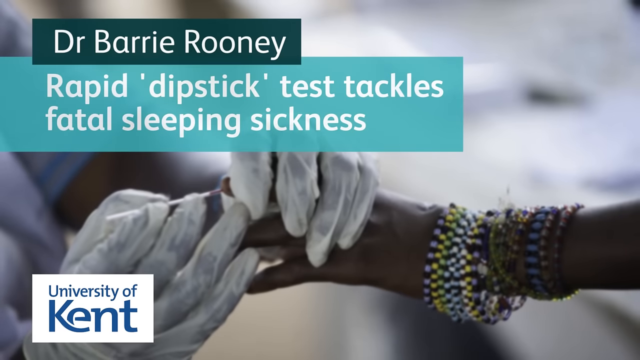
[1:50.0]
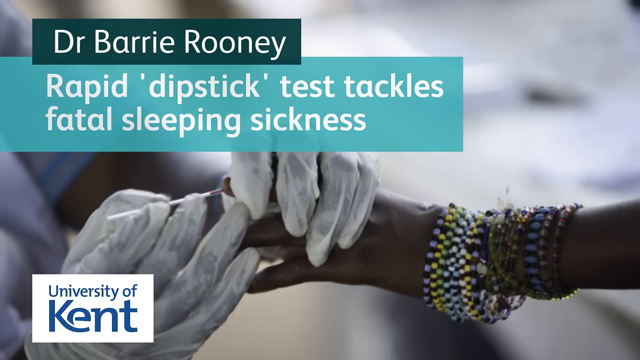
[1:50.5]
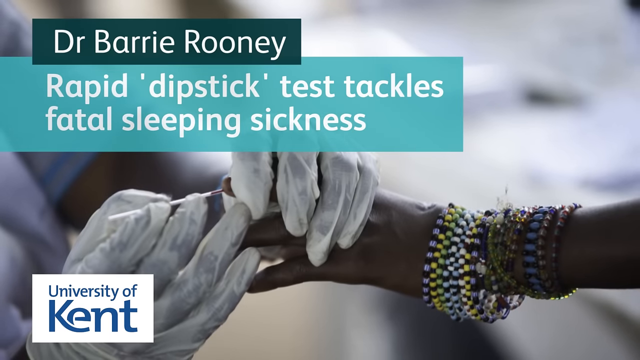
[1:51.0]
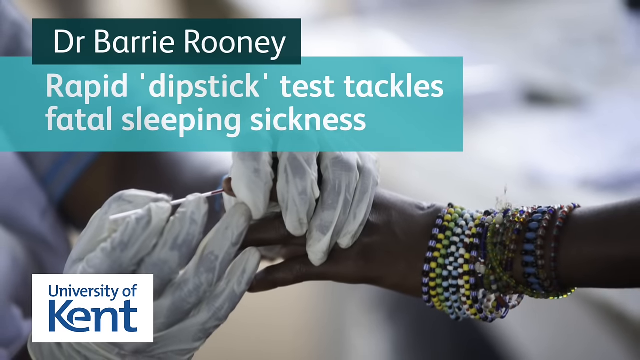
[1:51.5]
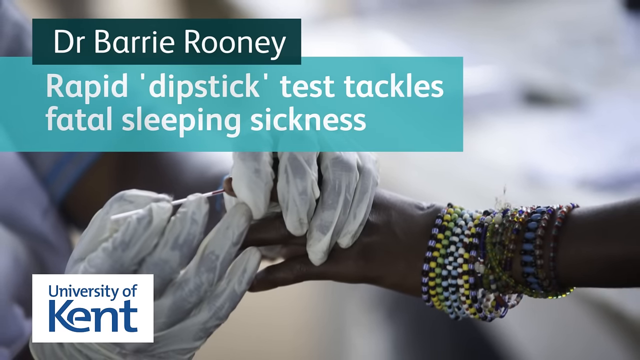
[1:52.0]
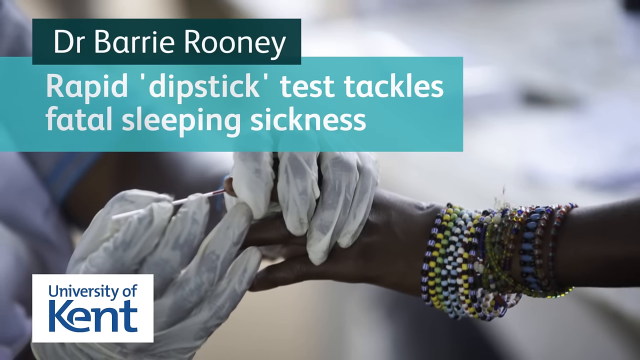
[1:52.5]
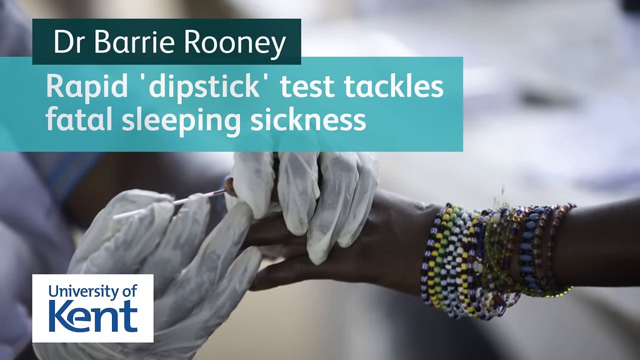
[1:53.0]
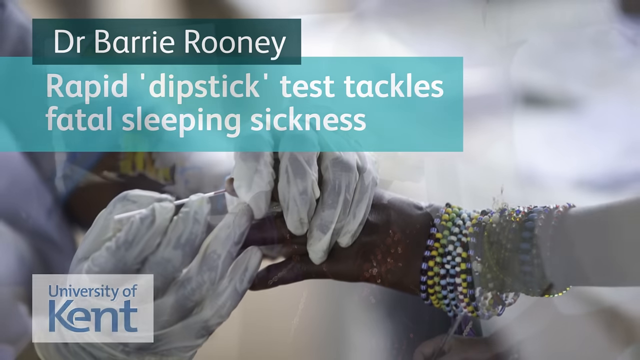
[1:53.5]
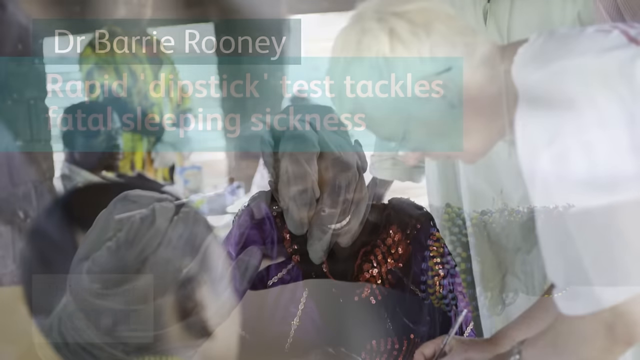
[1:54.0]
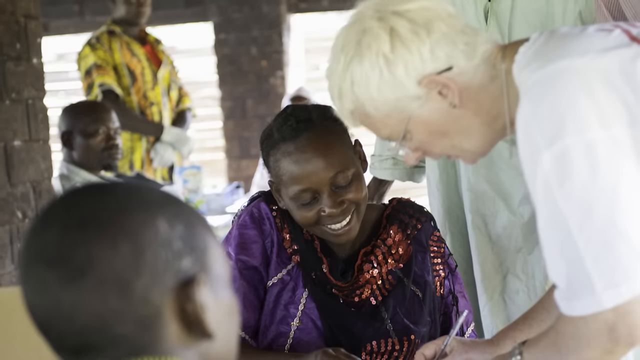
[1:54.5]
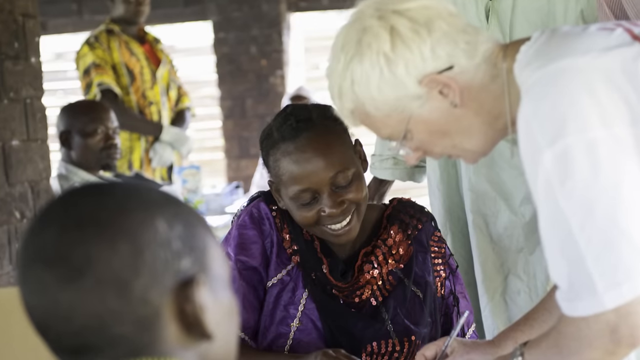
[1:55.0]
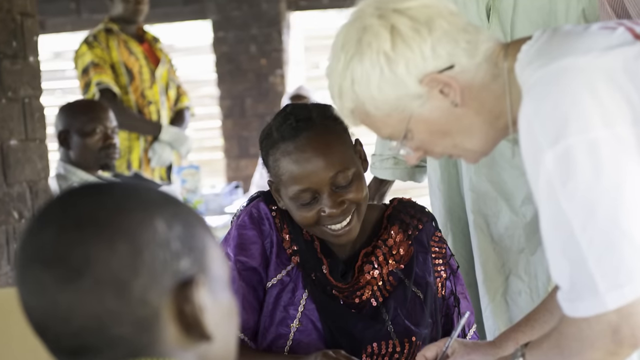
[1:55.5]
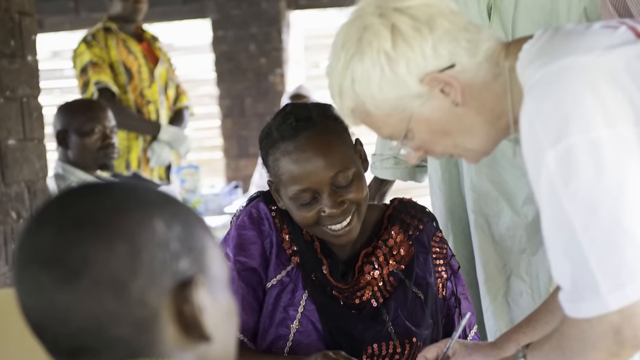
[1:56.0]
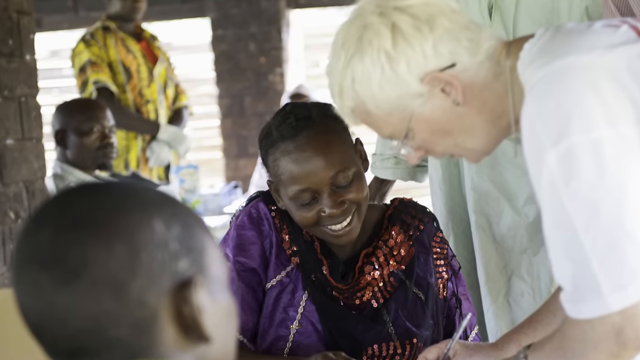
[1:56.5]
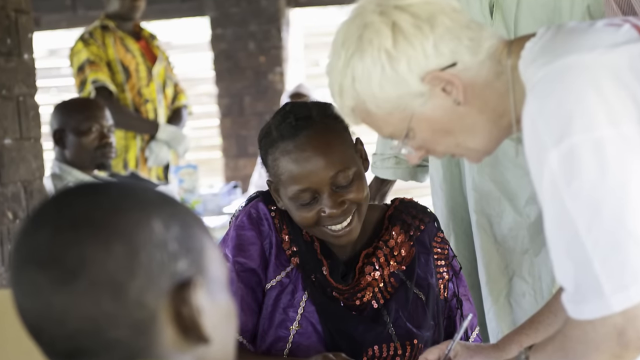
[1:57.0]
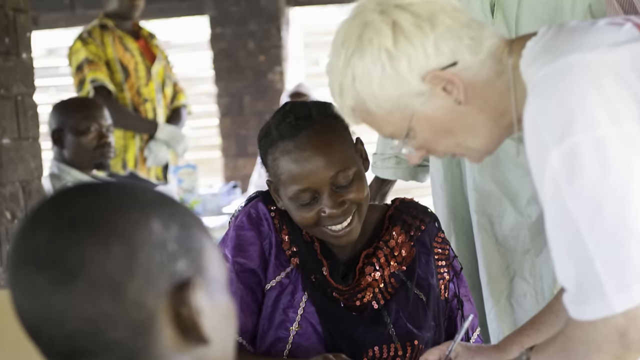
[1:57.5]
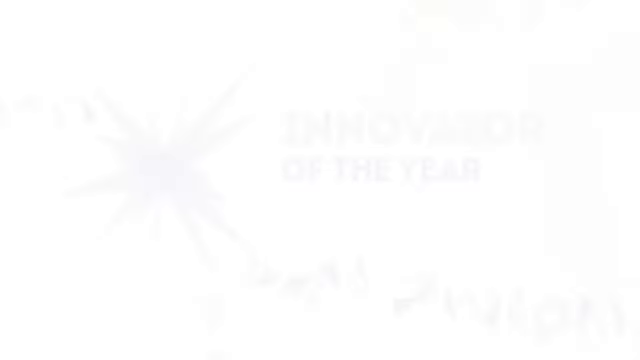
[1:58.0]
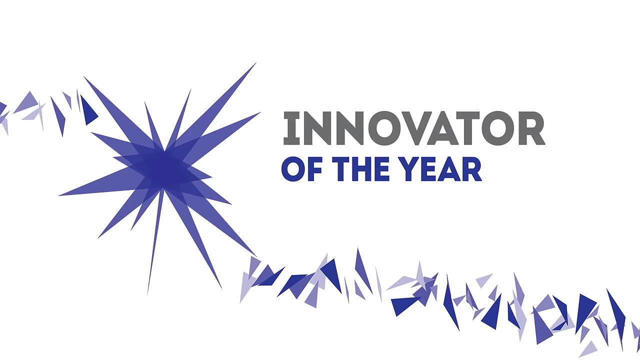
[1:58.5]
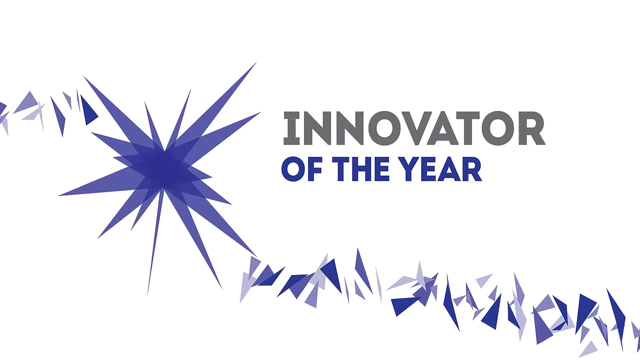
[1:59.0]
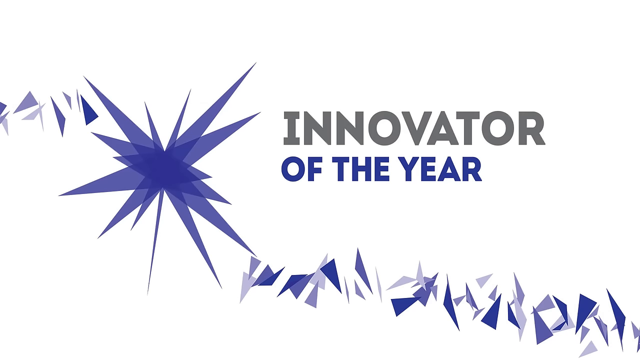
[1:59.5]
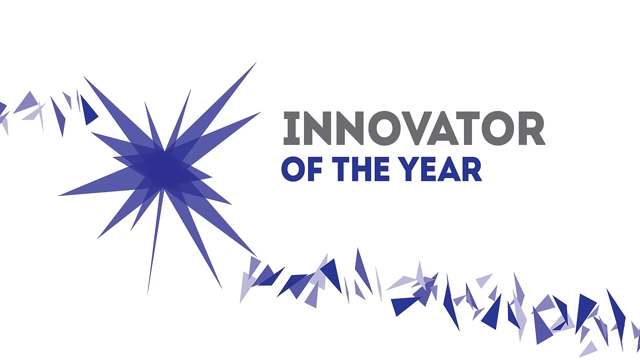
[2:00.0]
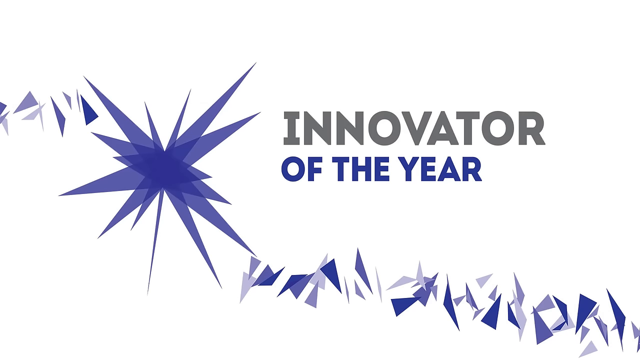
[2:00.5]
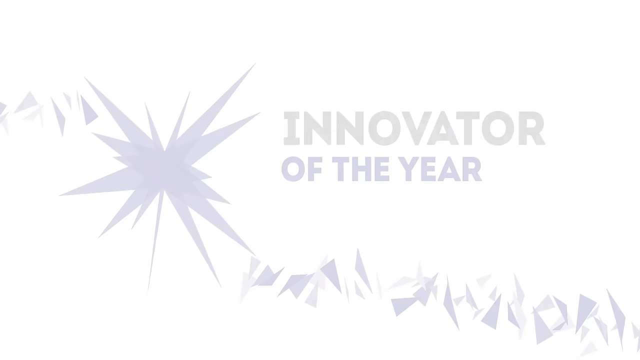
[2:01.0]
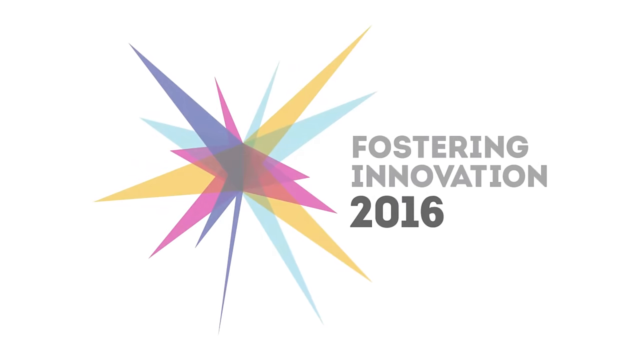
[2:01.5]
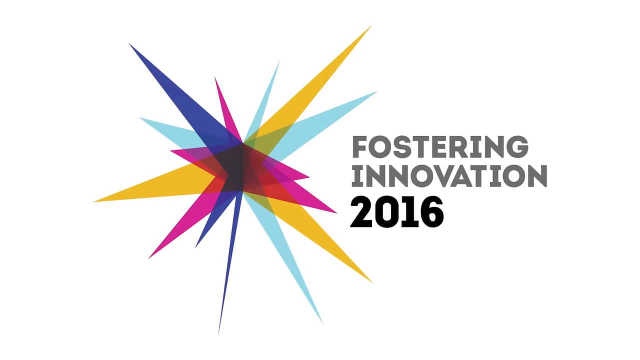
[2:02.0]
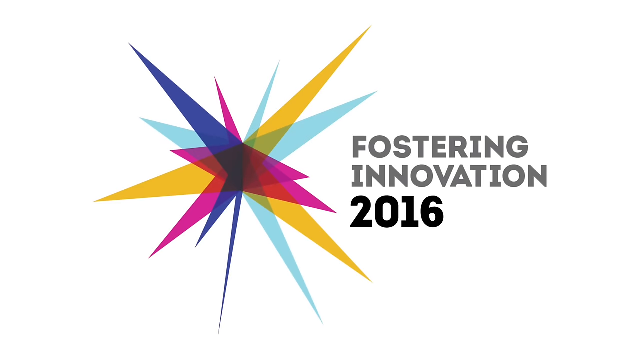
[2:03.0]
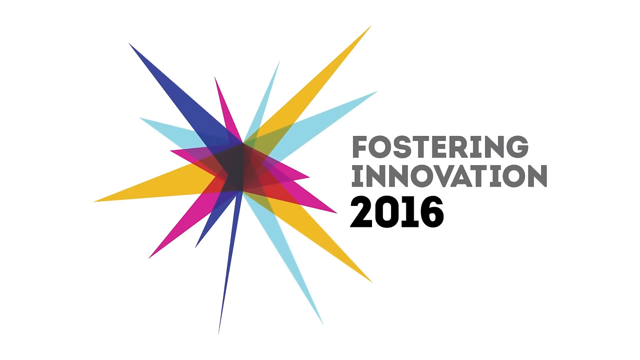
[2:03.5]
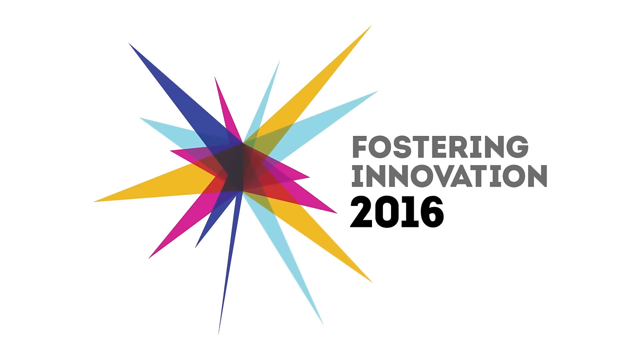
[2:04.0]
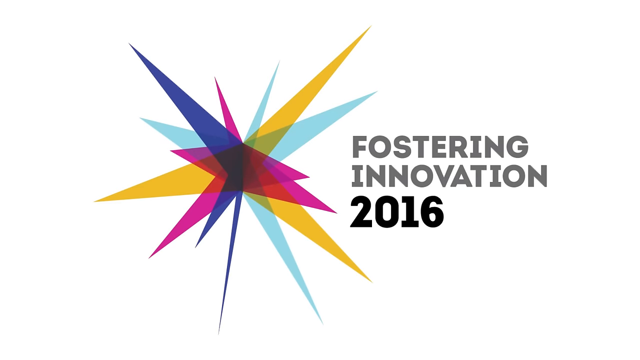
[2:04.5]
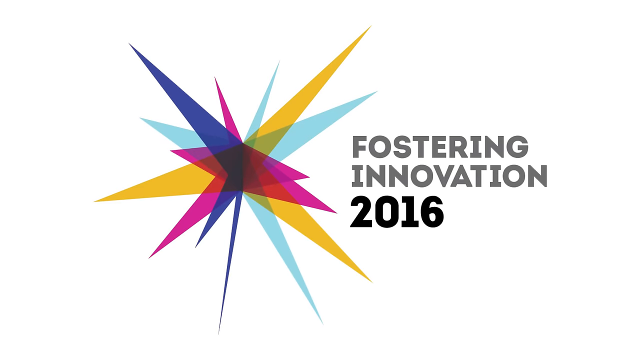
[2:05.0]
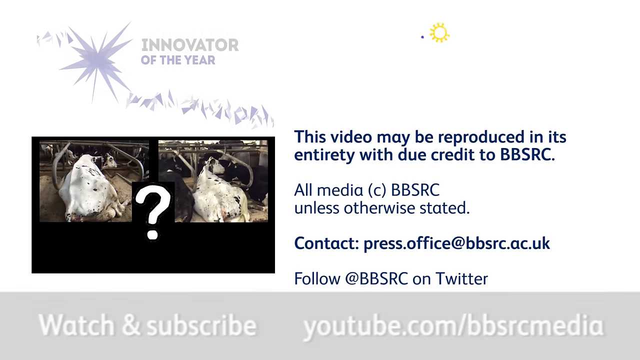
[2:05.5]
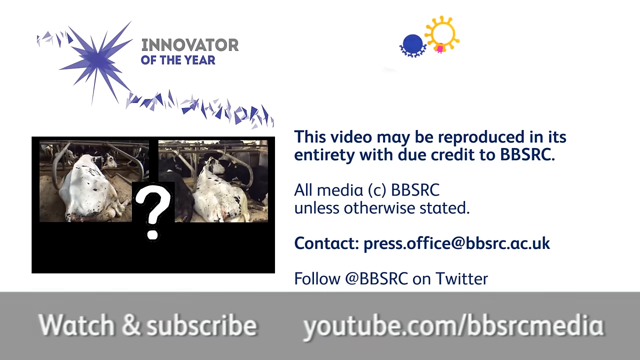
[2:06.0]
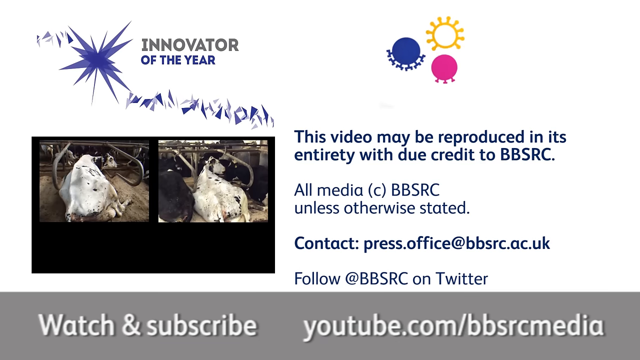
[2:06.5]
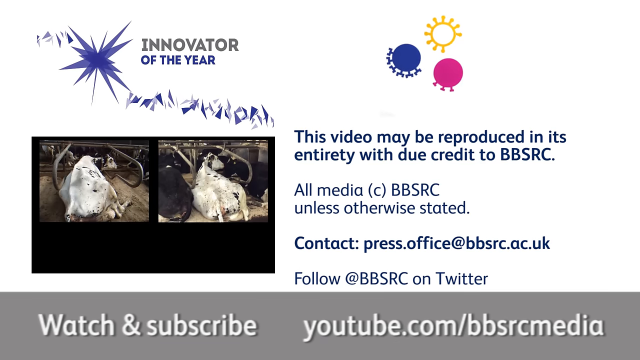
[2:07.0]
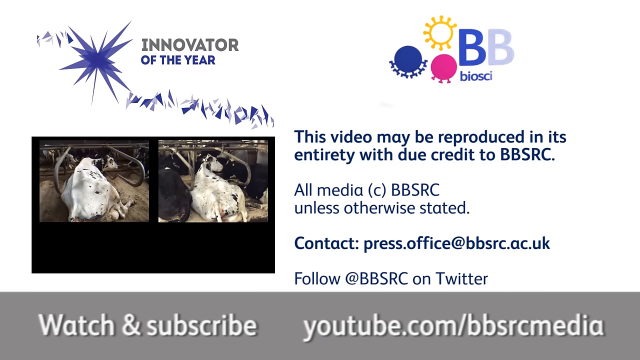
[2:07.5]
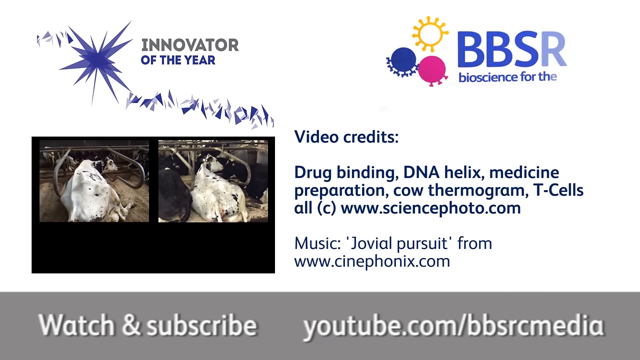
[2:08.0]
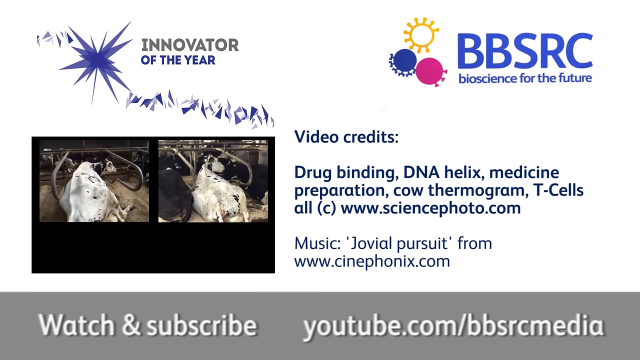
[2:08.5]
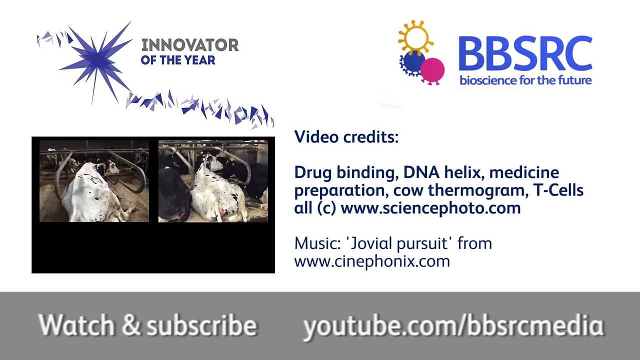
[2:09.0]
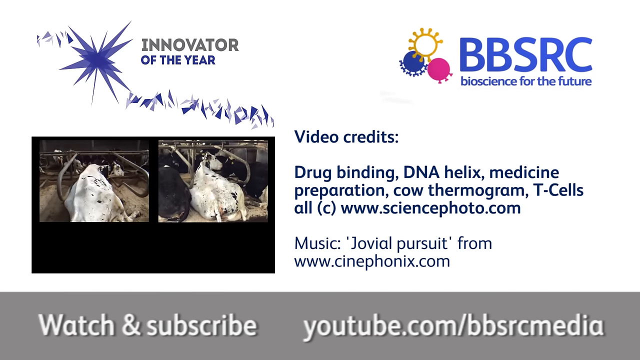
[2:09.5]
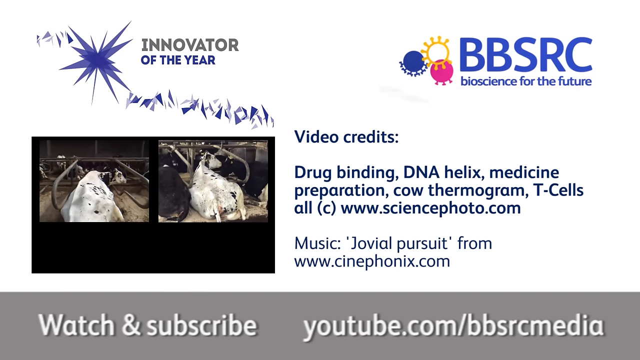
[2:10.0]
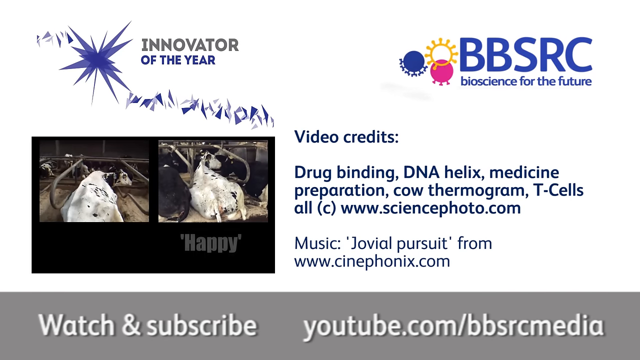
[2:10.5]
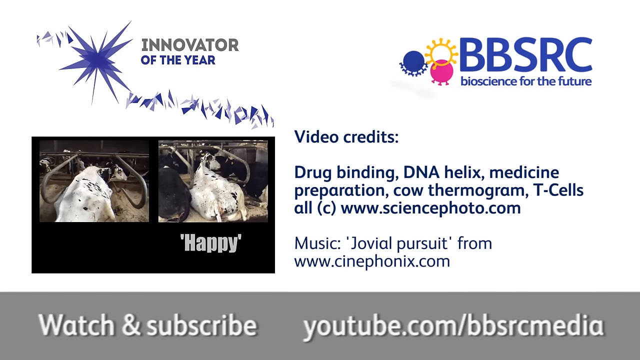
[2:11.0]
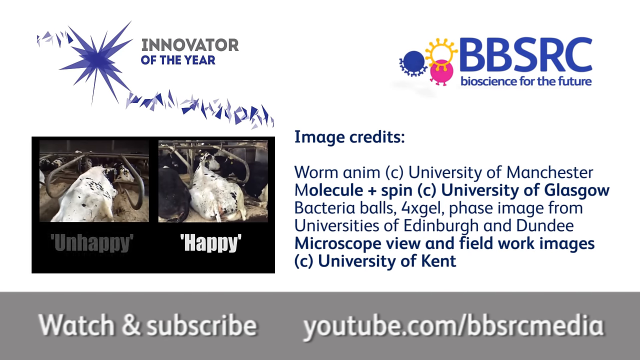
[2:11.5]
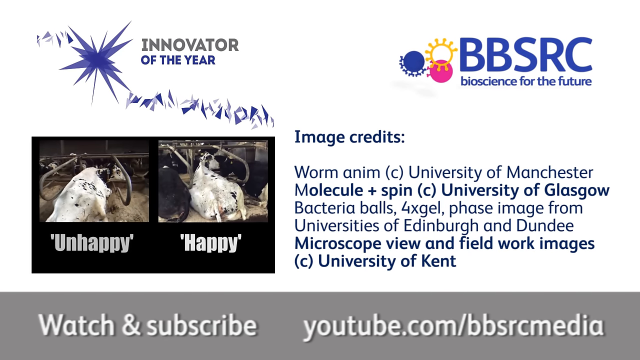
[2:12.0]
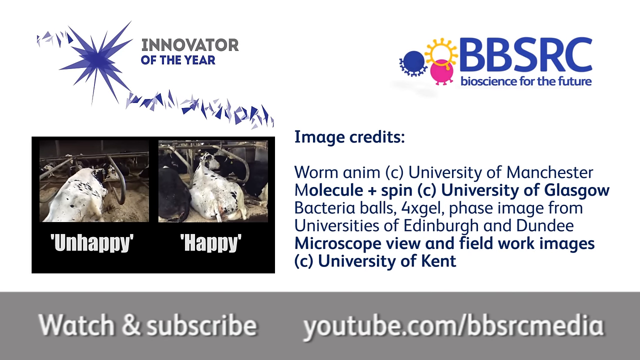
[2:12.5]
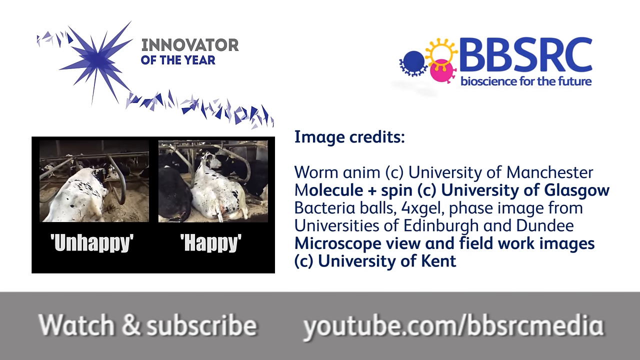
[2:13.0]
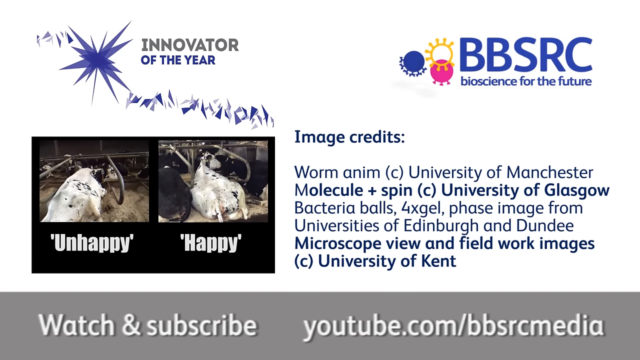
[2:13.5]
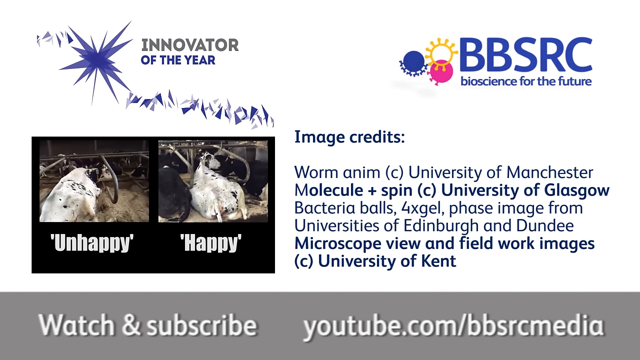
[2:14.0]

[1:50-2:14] Two hands are shown. A hand and forearm come from the right of the screen, with several beaded bracelets around the wrist in purple, yellow, white, blue, brown and green; it looks like a black woman's hand. Also from the right side of the screen come two hands in white gloves. The left gloved hand holds the fingers of the woman's hand, and the right hand appears to hold a swab with a brown tip between the index finger and thumb. Text on the screen reads "Dr. Barry Rooney, rapid dipstick test tackles fatal sleeping sickness", and at the bottom "University of". The video then switches to footage of two cows shown from the back, lying down.